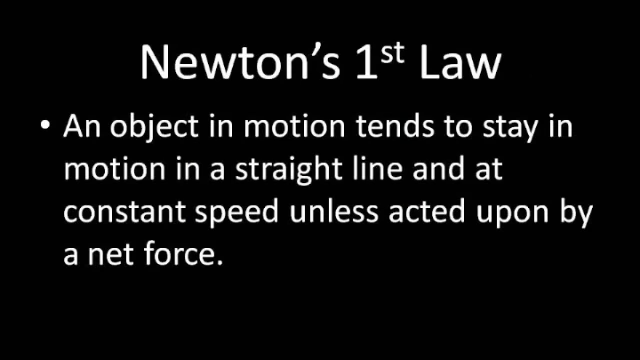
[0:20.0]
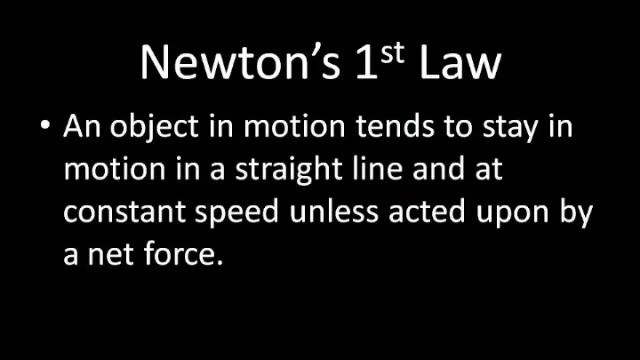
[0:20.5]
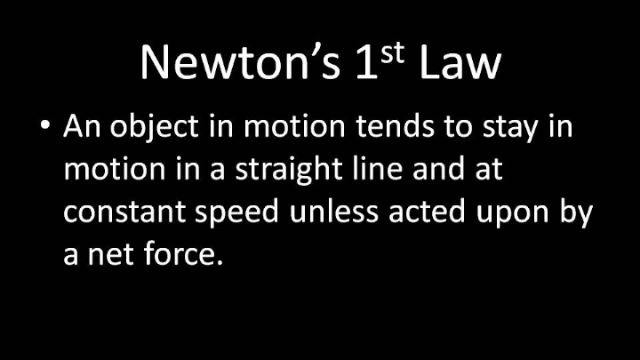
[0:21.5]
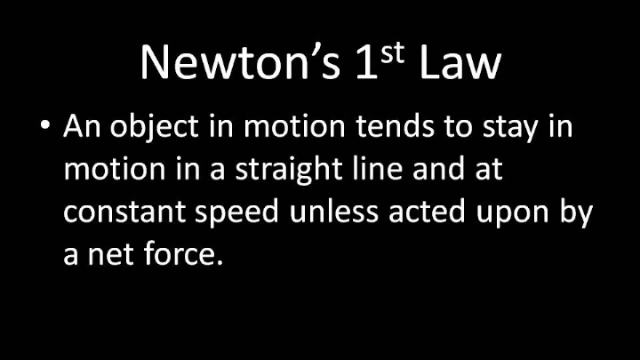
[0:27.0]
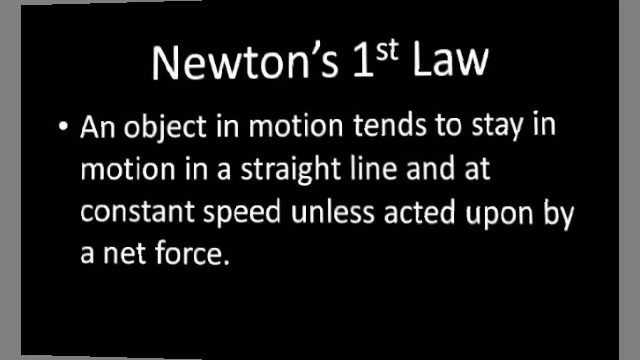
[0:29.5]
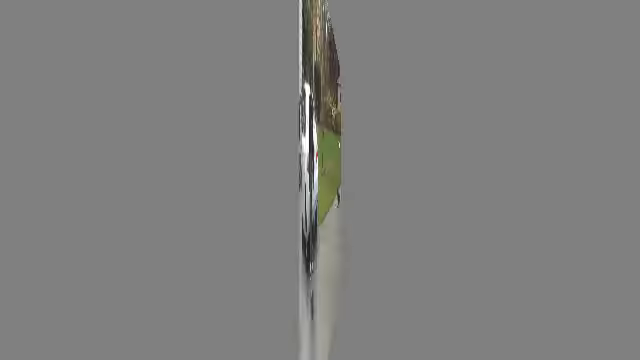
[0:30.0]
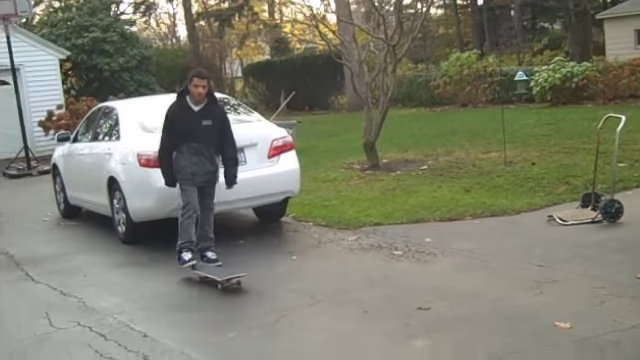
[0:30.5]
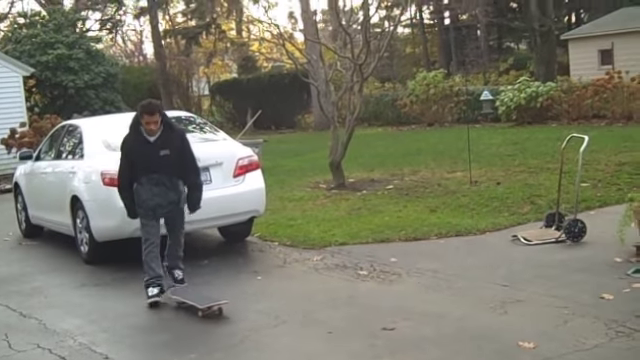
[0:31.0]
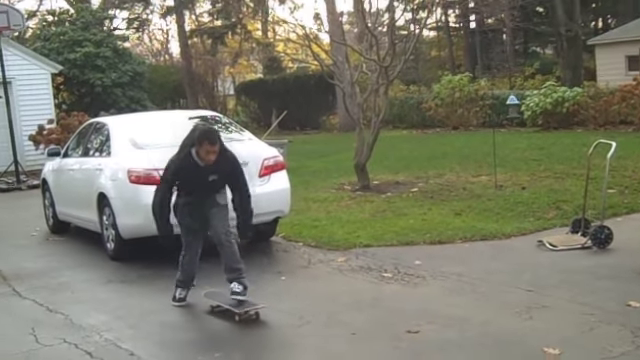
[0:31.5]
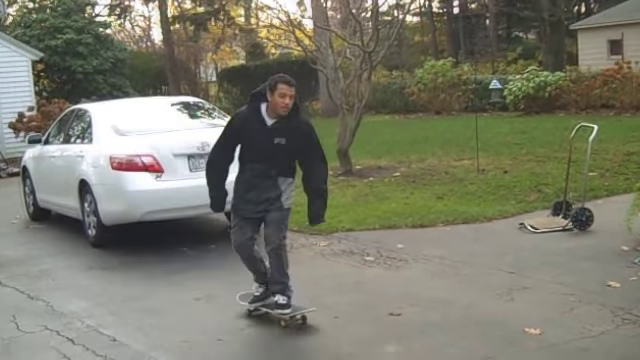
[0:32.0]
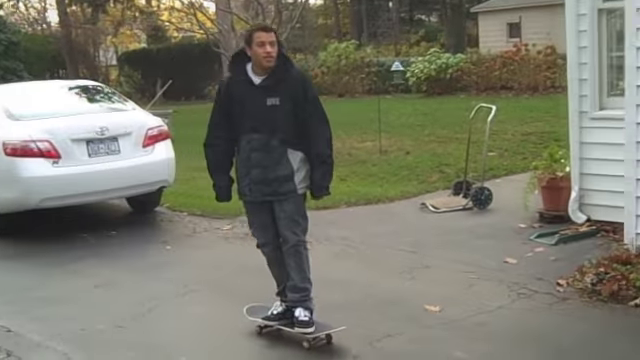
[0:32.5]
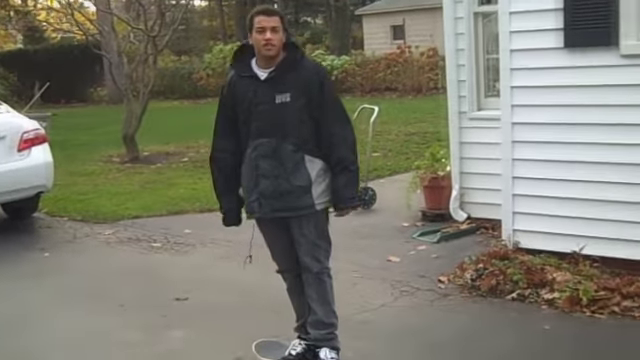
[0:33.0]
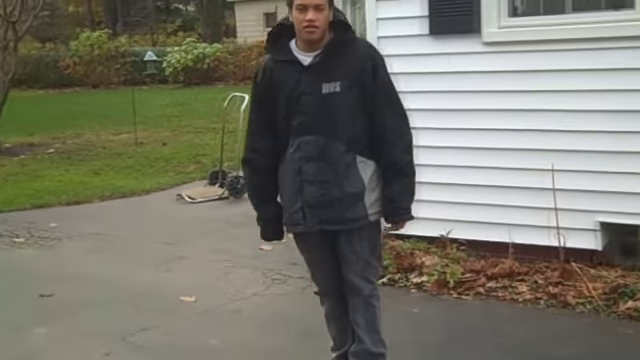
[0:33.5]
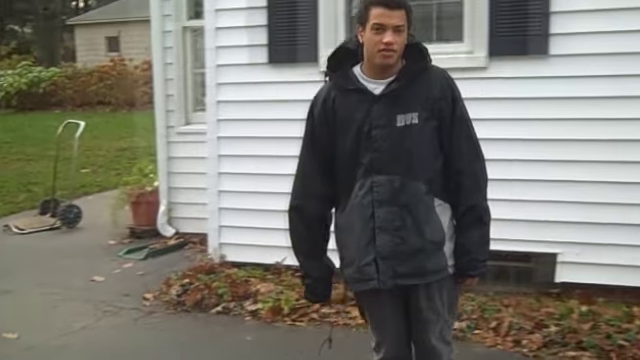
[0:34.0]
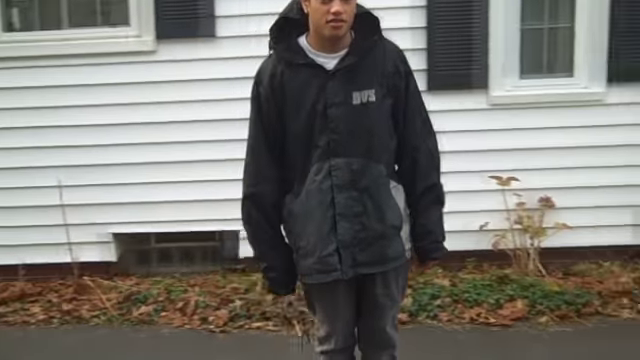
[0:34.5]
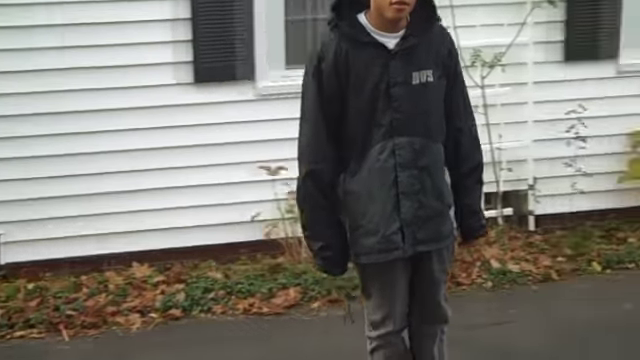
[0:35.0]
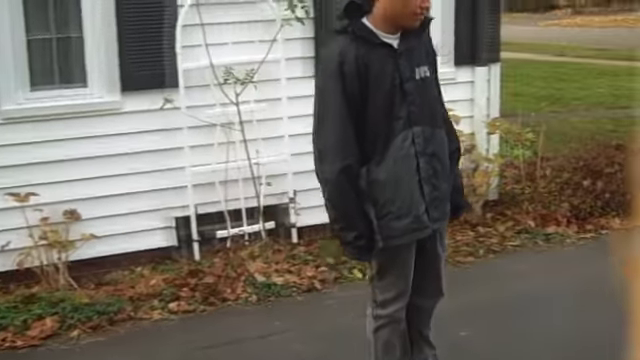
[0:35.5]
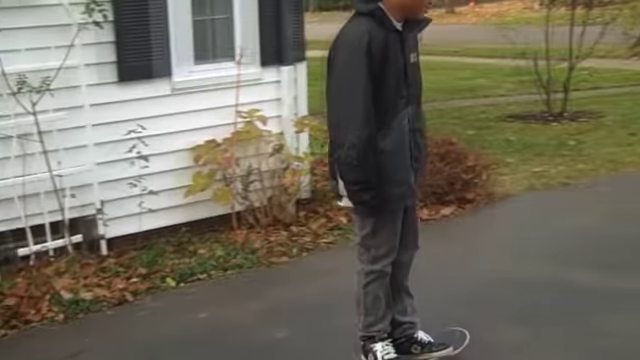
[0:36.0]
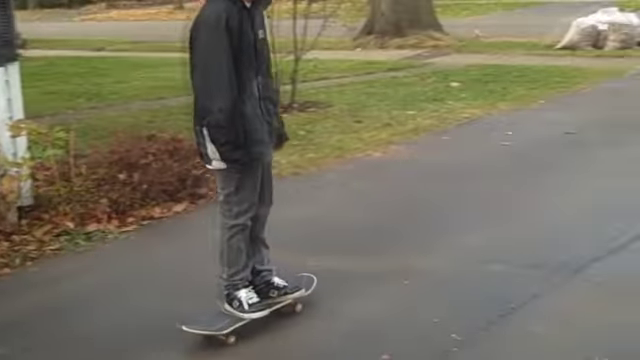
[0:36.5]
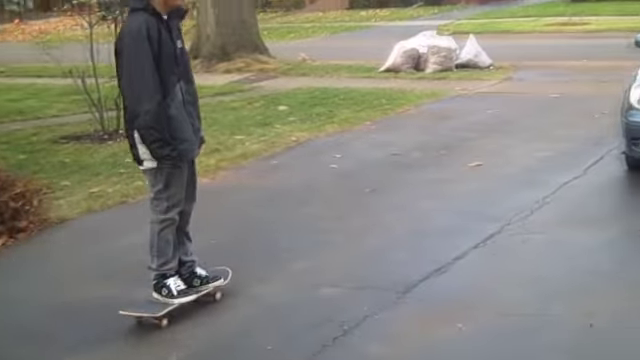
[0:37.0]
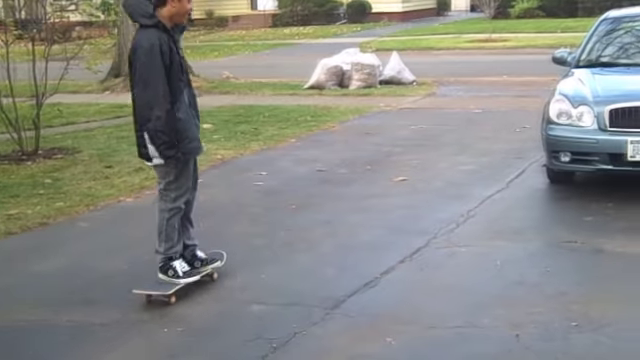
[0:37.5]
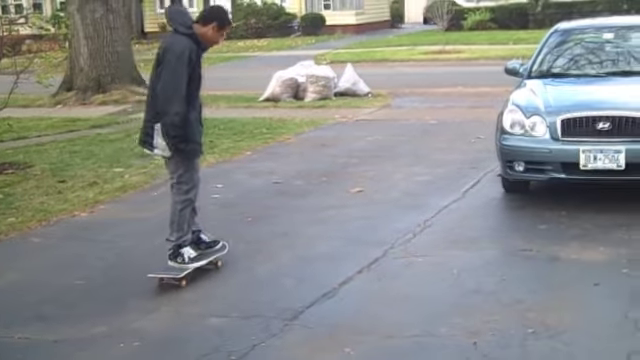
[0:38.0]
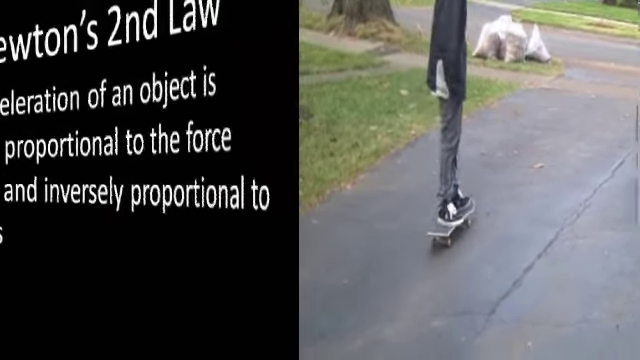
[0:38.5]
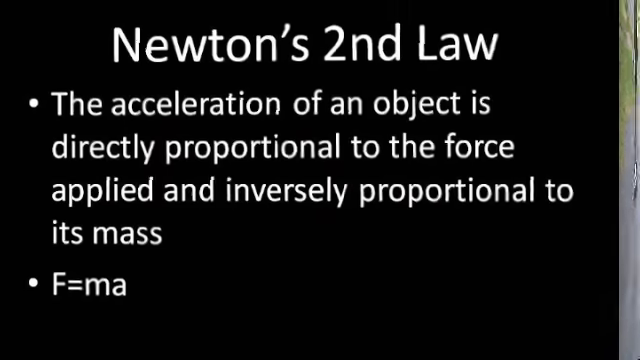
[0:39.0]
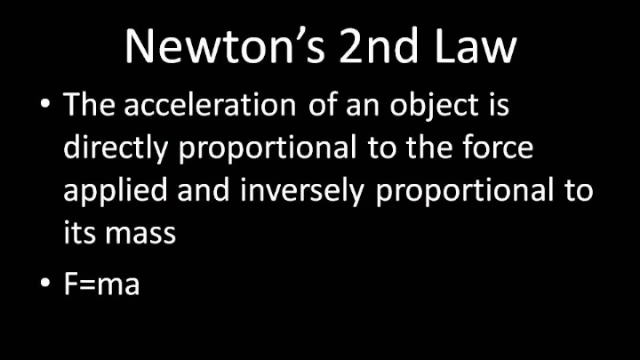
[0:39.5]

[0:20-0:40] The "Newton's First Law" title is a good size, spaced a little, and centered; the title text is probably around size 28.5 and the text beneath it probably around 26. The bullet point is a white circle, with a quarter indent to the right, and everything is aligned on the left. The same kid then starts to skateboard, apparently with his hood down this time, starting right behind a parked white car. He gets on the board, bending one of his legs, and stands straight looking at the camera as the camera pans into him a little. The white house is behind him as he goes down the driveway, not doing much of anything, and the camera keeps following him. A crack in the concrete runs lengthwise. As he almost finishes, another parked car, a teal color, is visible. In the distance by the curb is a bunch of white bags; through the bags it looks like they hold fallen leaves someone collected. Beyond is the road, and to the left a massive tree trunk sticks out of the ground.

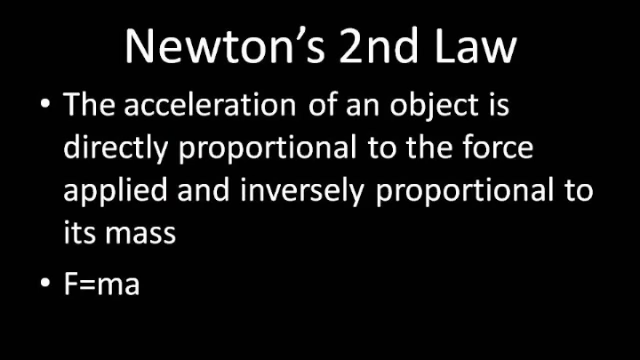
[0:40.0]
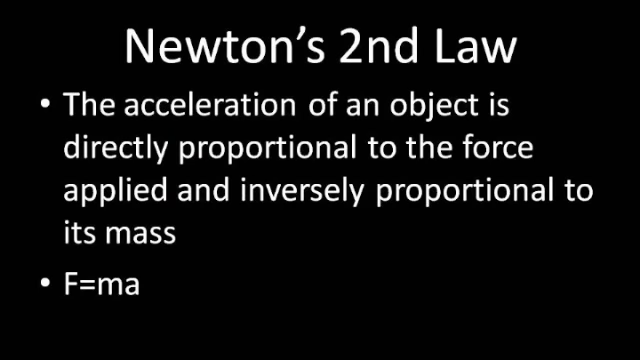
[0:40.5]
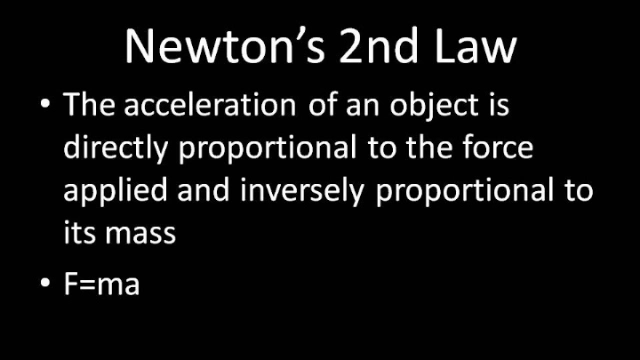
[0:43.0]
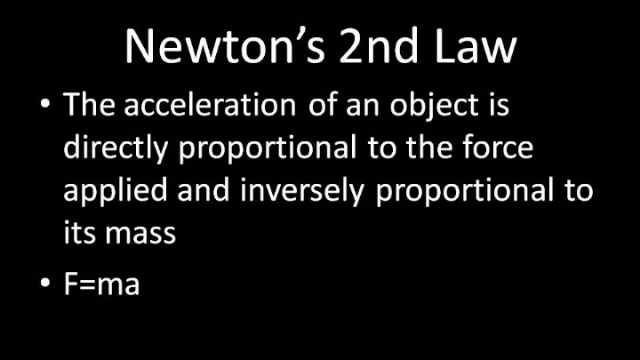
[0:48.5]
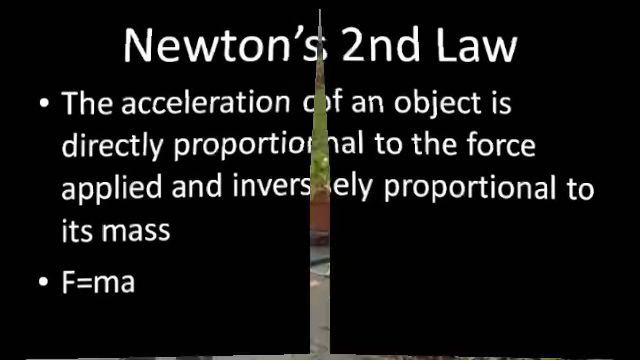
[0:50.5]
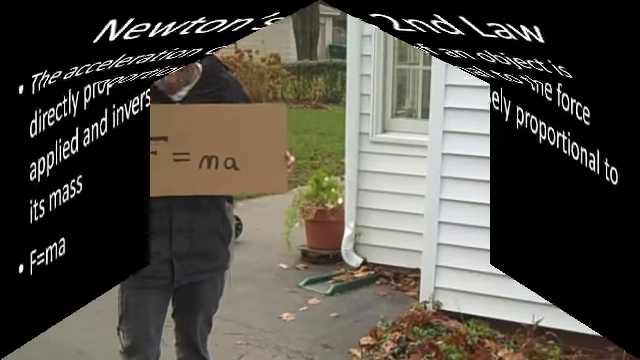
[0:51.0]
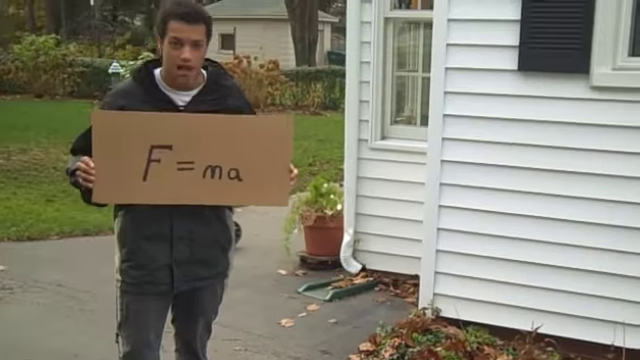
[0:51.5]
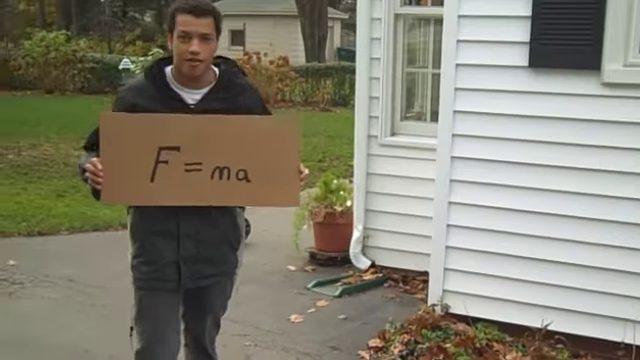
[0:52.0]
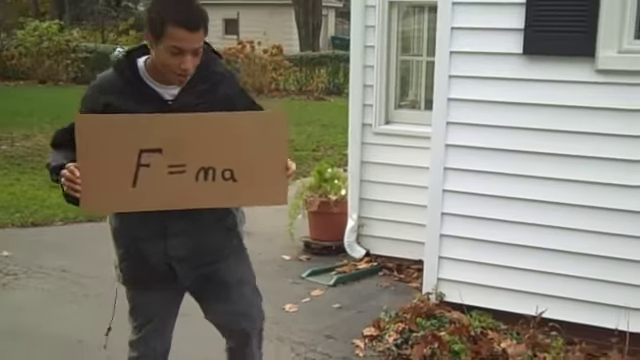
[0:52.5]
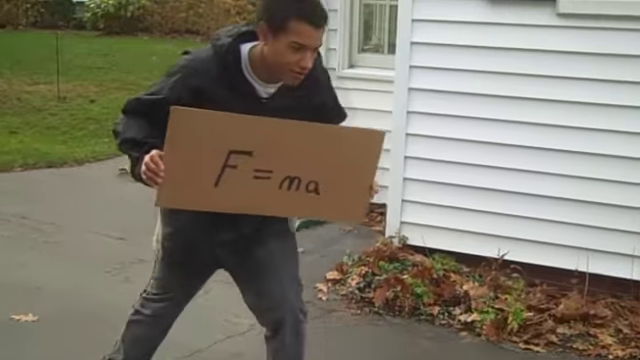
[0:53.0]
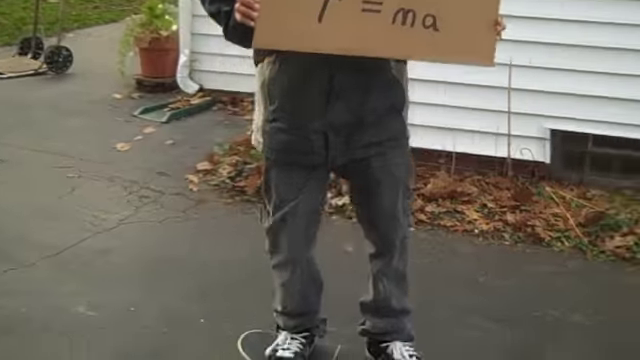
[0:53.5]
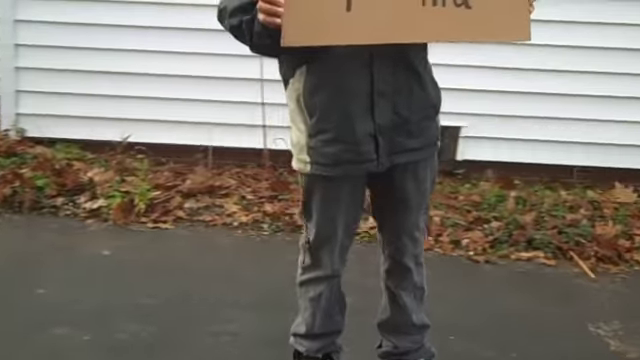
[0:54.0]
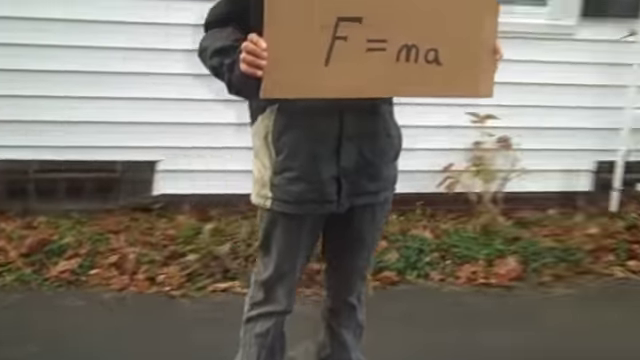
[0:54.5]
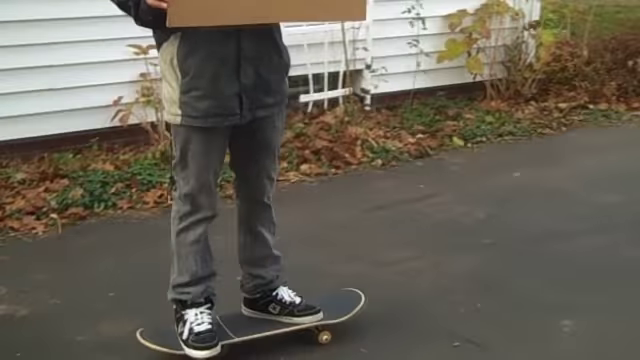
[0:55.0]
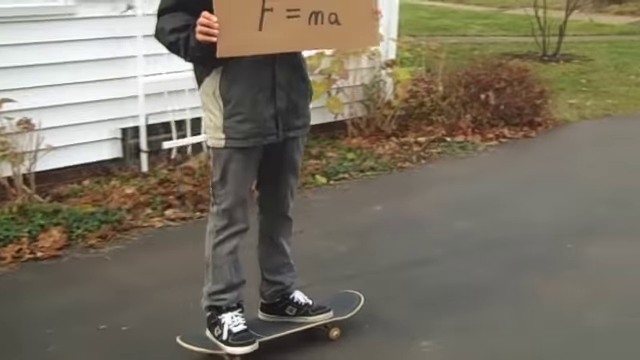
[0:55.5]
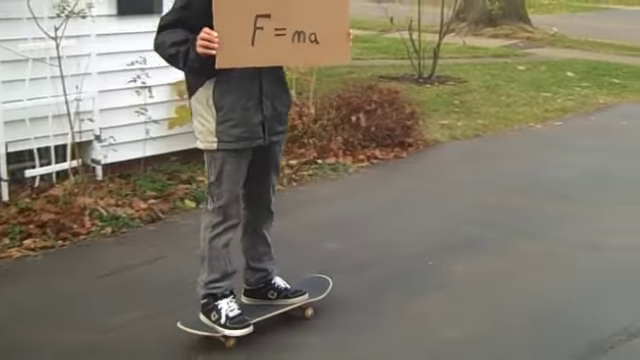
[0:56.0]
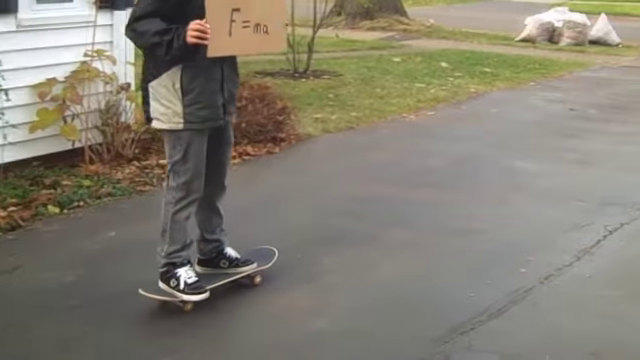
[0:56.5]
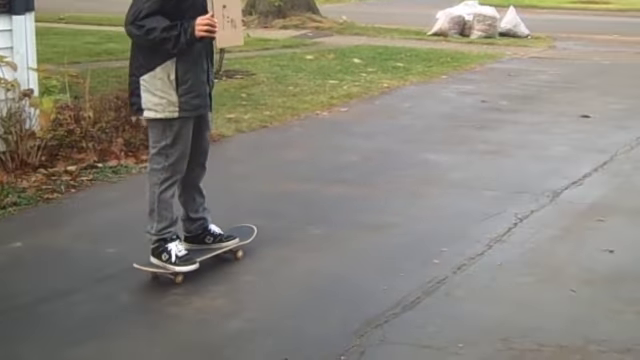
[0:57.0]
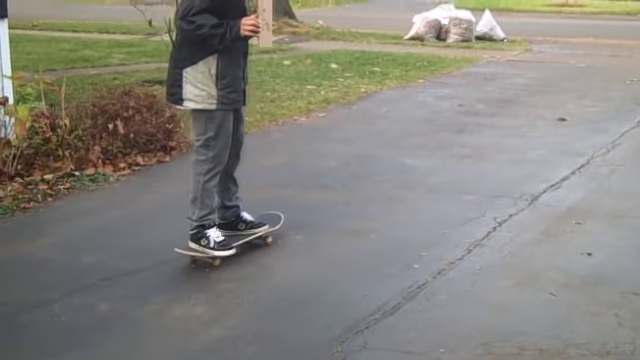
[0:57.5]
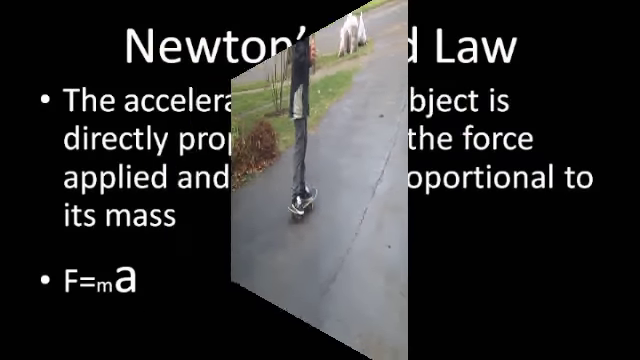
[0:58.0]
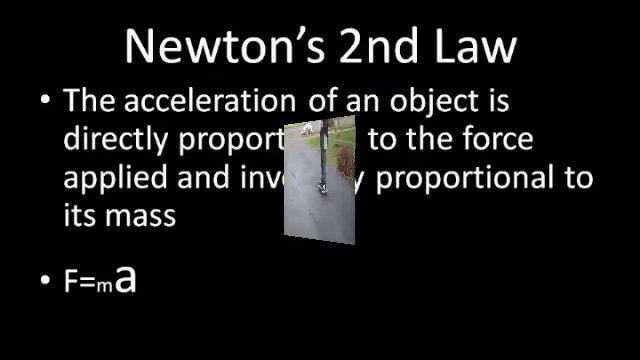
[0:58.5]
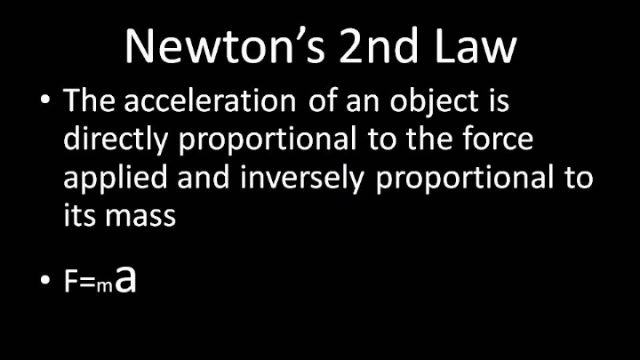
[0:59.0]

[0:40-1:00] Text underneath reads "F = ma." It stays on the screen for a while, then a curtain-like transition pulls a side away. The kid now holds up a cardboard sign that looks like it is written in sharpie, reading "F = ma." He is looking down and standing off to the left, and the side of the house is visible. White guttering comes down, looking almost dented, into a plastic container that collects rainwater. To the left of that is a terracotta-colored potted plant with leaves coming out on the left side. The kid holds the sign as he gets back on the skateboard; the shot shows his footwork, and his head is not visible as he skates down. The video then flips away with the curtain transition again. In the F = ma, the lowercase m is now followed by a bigger-looking a, which is still lowercase.